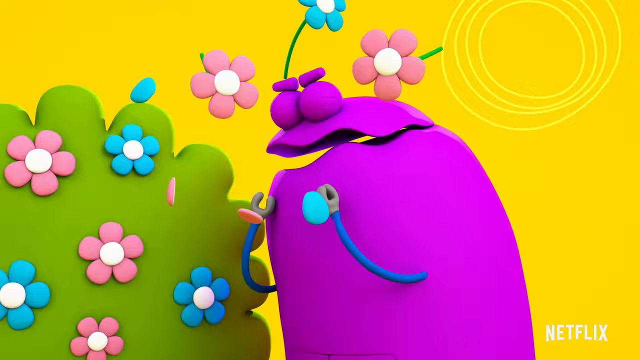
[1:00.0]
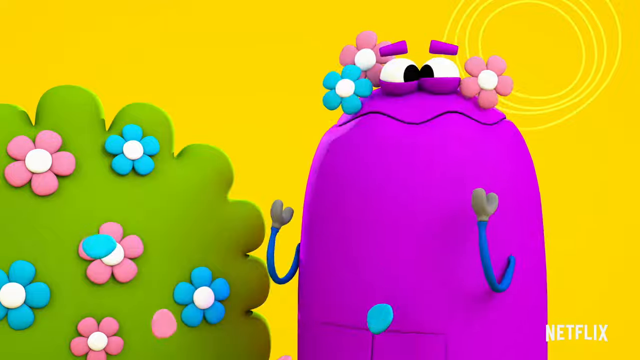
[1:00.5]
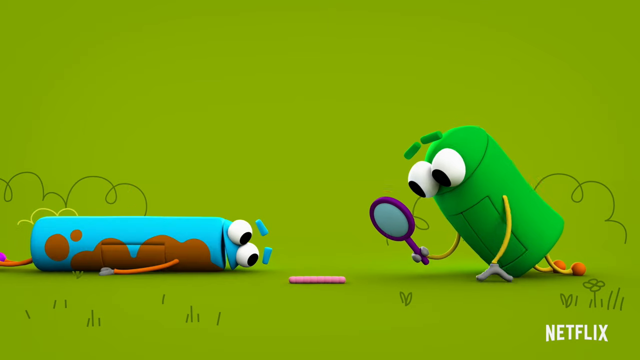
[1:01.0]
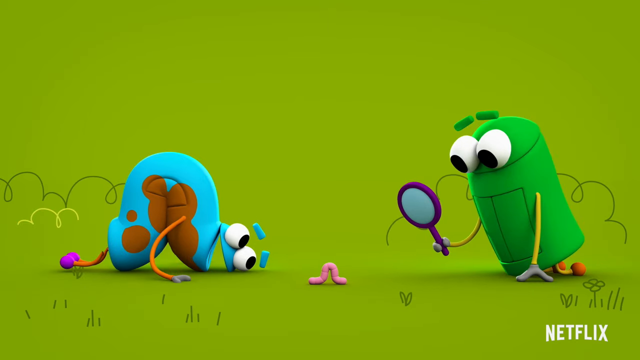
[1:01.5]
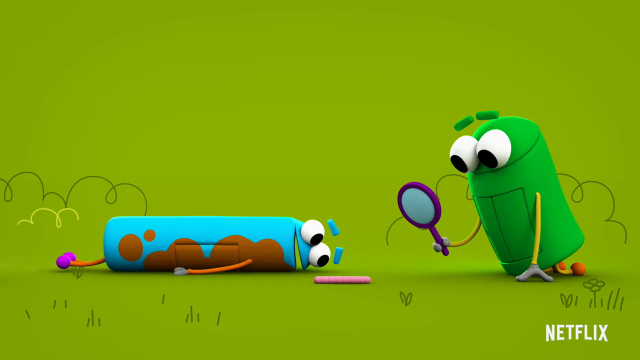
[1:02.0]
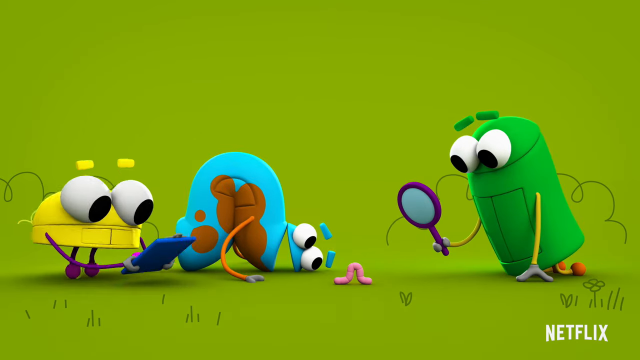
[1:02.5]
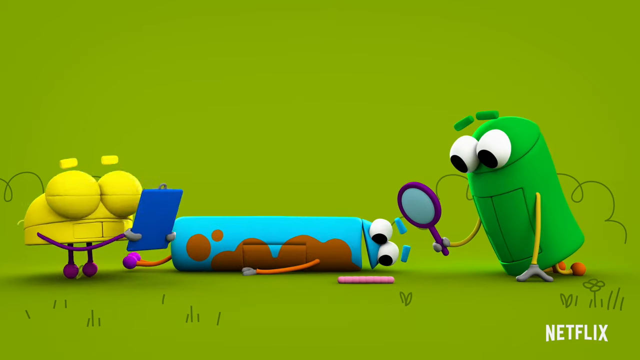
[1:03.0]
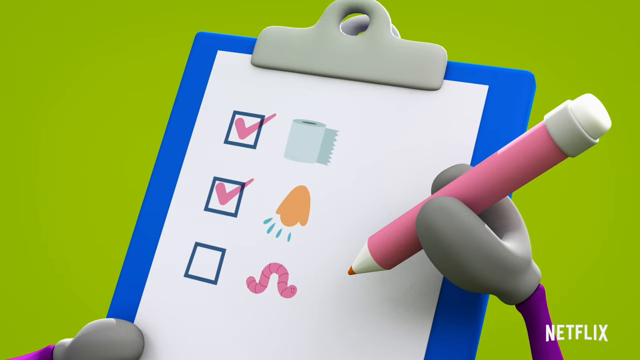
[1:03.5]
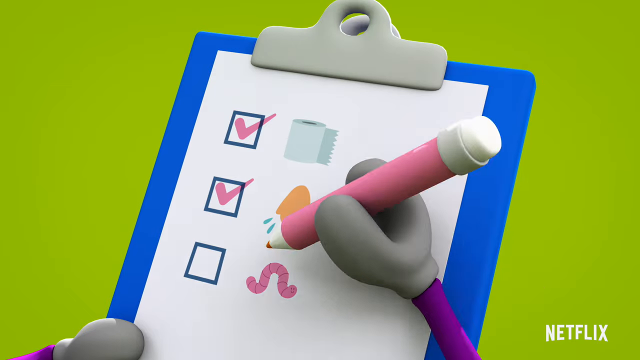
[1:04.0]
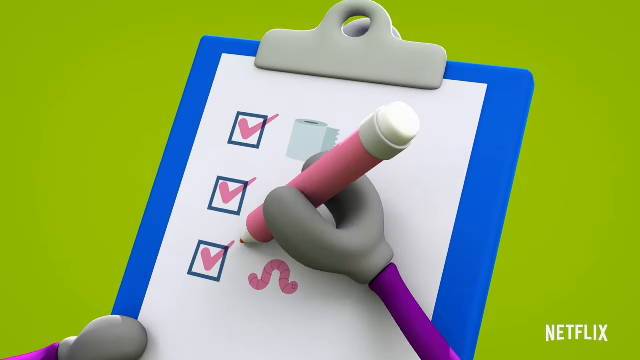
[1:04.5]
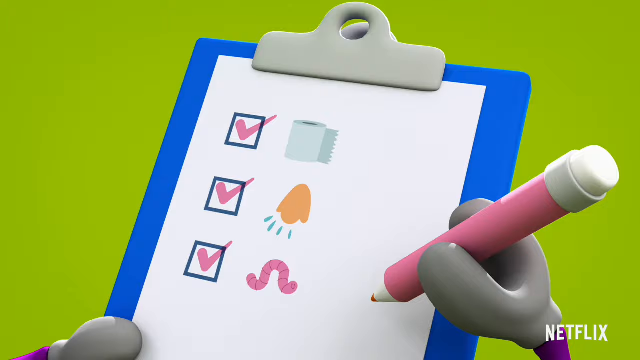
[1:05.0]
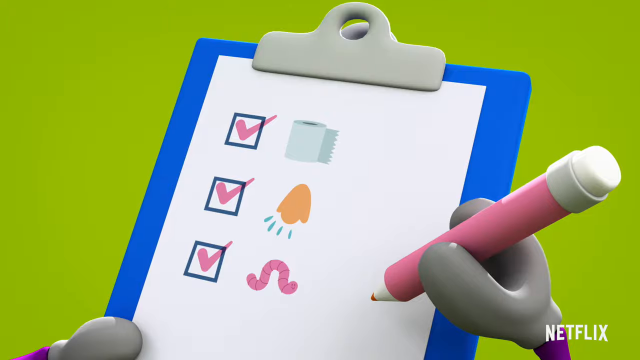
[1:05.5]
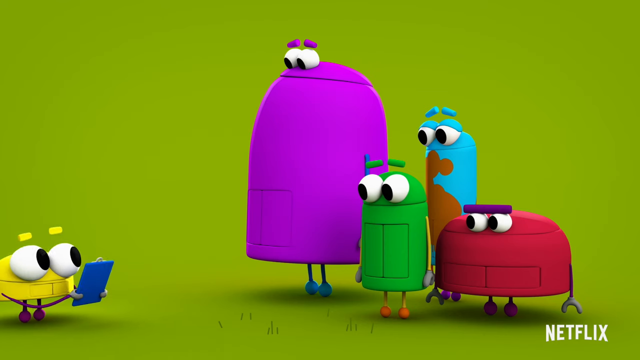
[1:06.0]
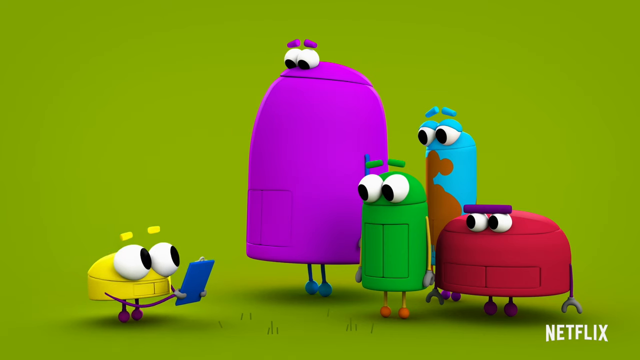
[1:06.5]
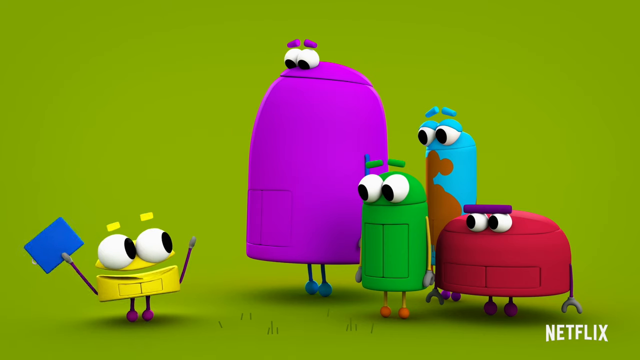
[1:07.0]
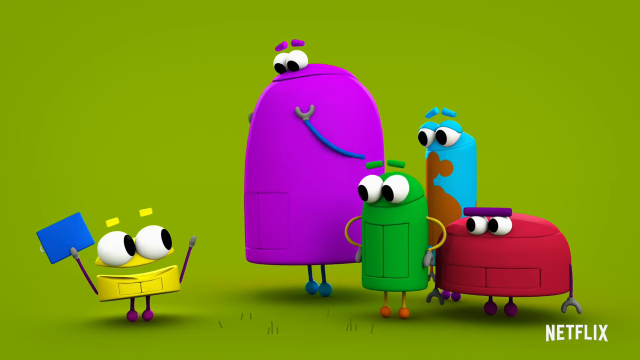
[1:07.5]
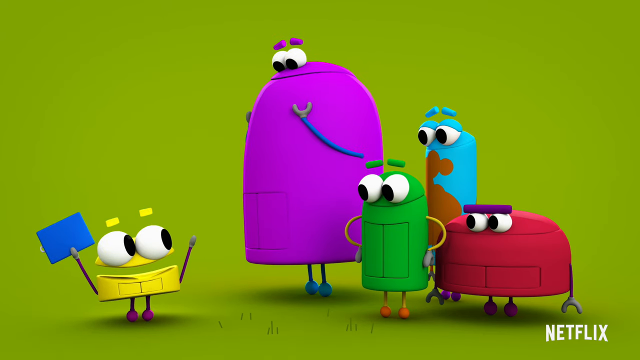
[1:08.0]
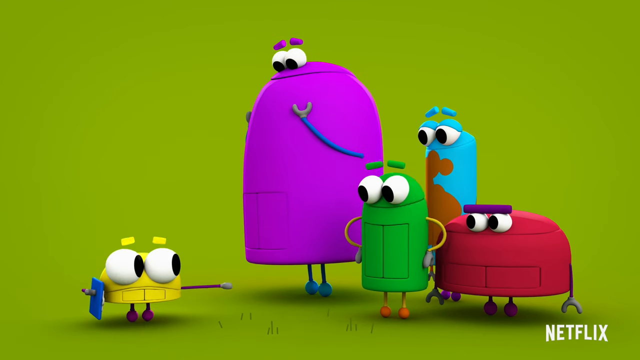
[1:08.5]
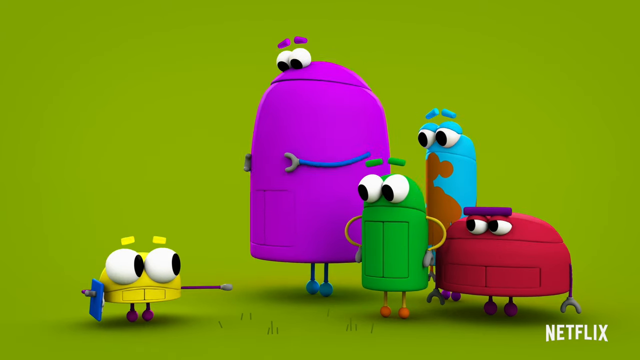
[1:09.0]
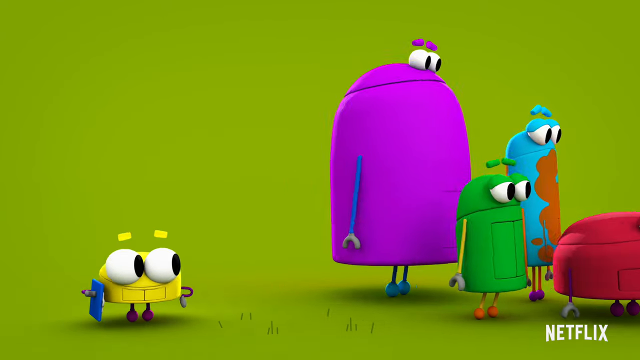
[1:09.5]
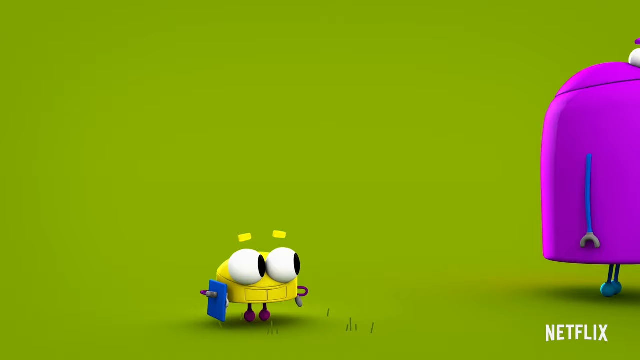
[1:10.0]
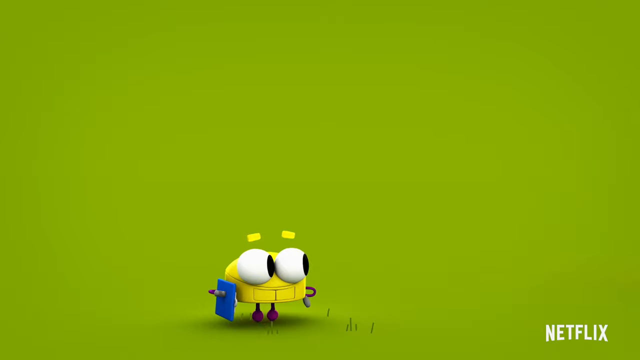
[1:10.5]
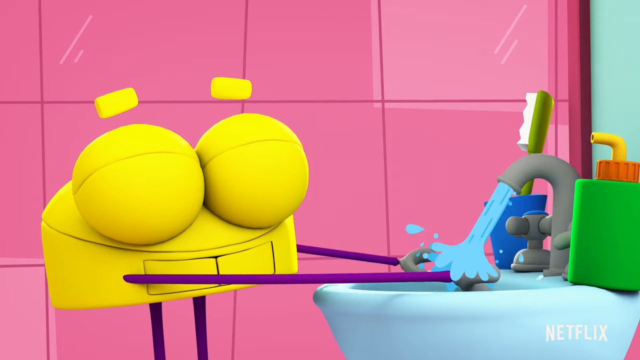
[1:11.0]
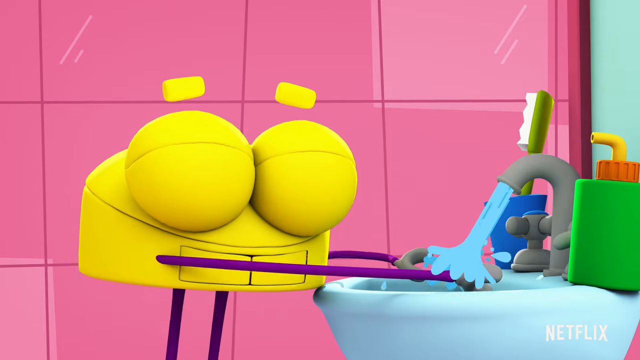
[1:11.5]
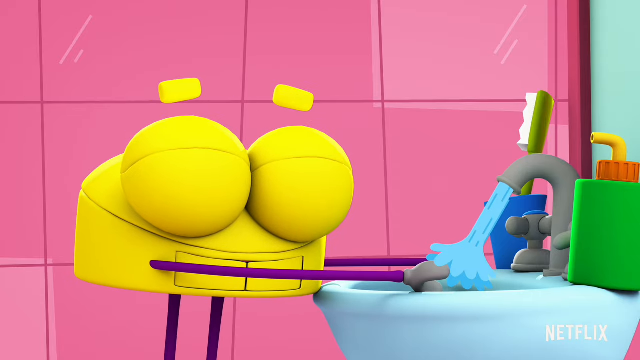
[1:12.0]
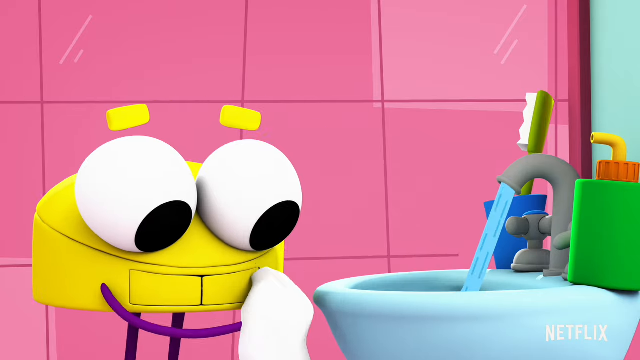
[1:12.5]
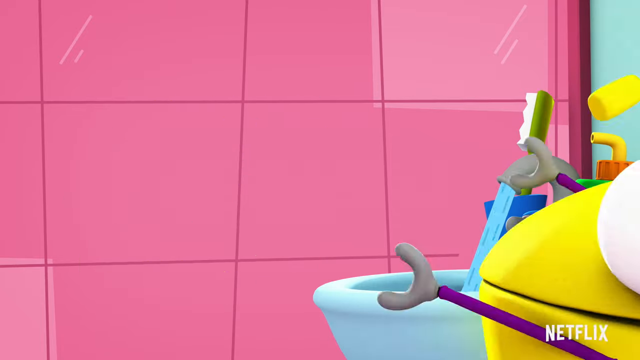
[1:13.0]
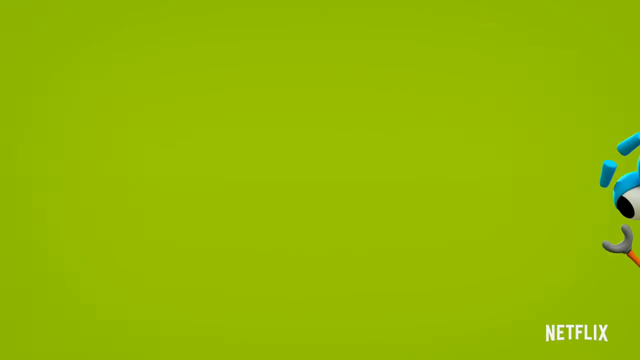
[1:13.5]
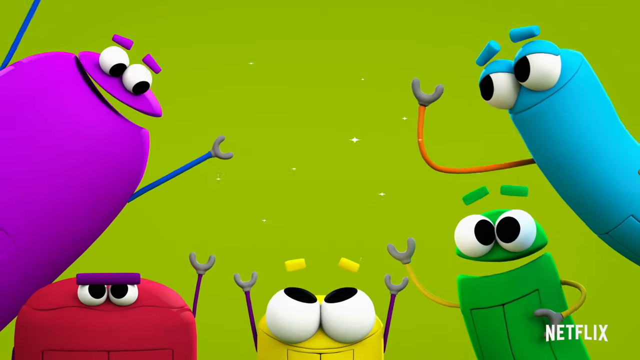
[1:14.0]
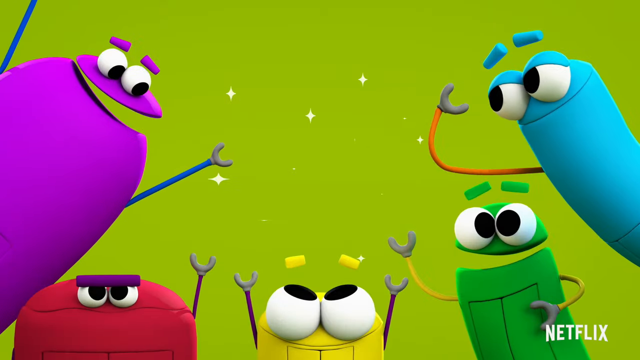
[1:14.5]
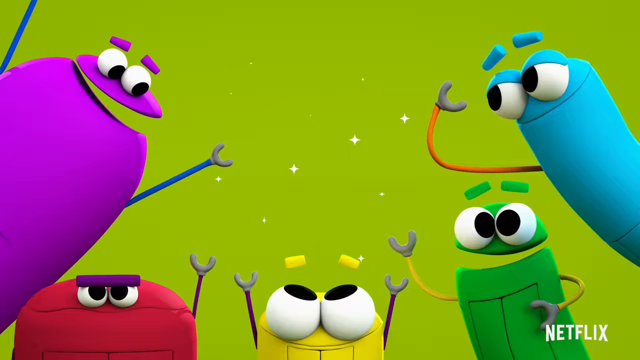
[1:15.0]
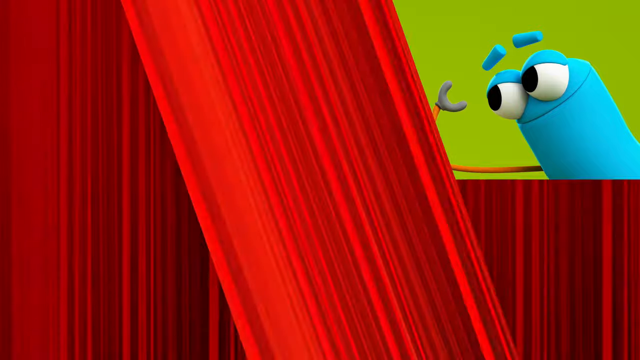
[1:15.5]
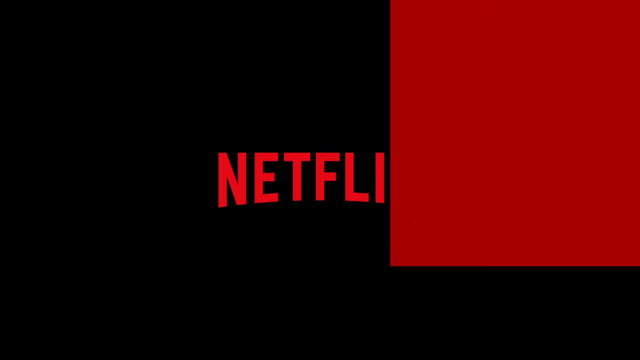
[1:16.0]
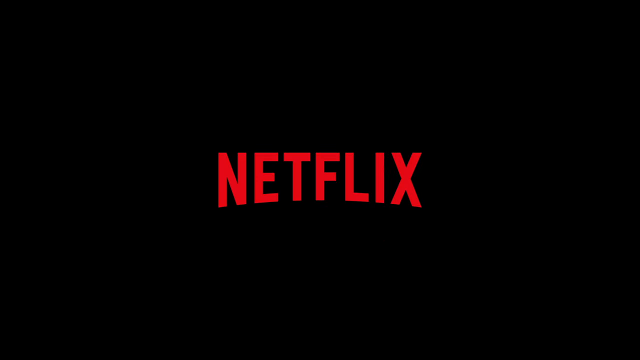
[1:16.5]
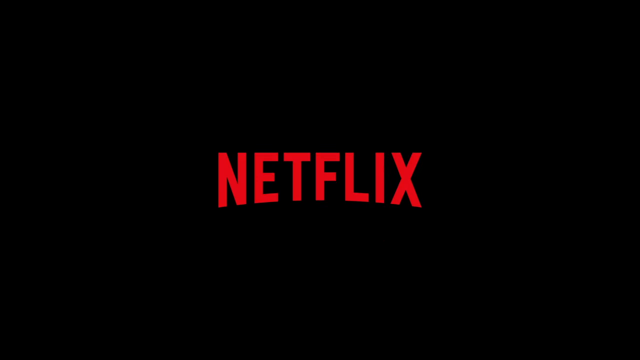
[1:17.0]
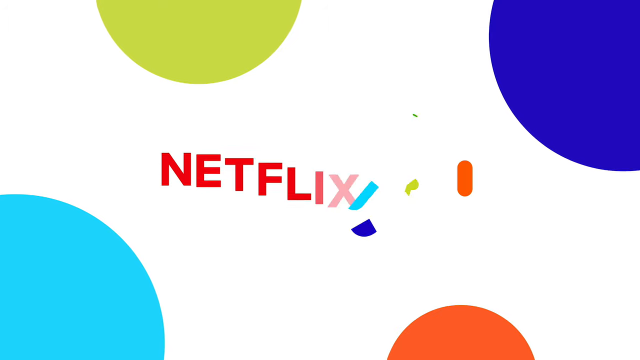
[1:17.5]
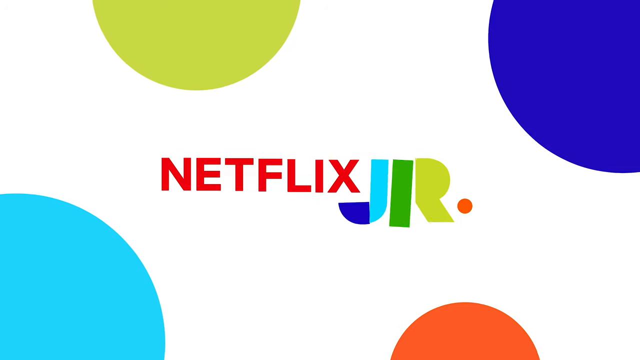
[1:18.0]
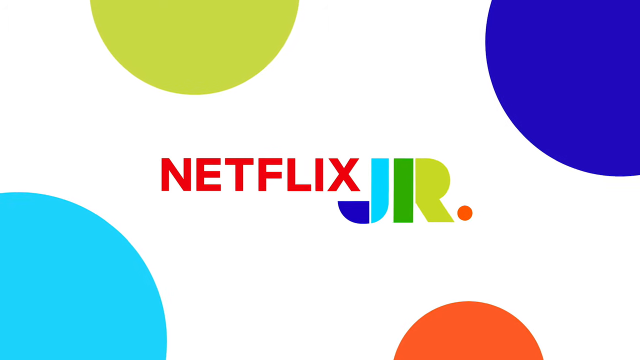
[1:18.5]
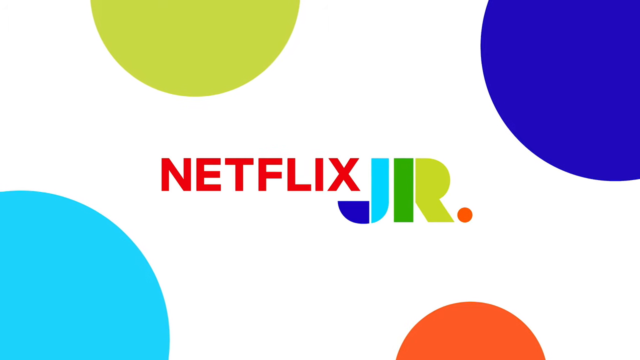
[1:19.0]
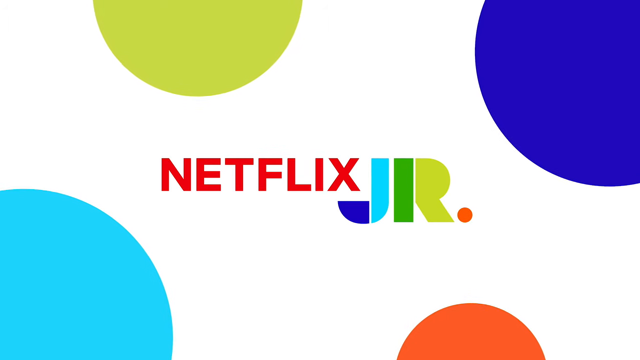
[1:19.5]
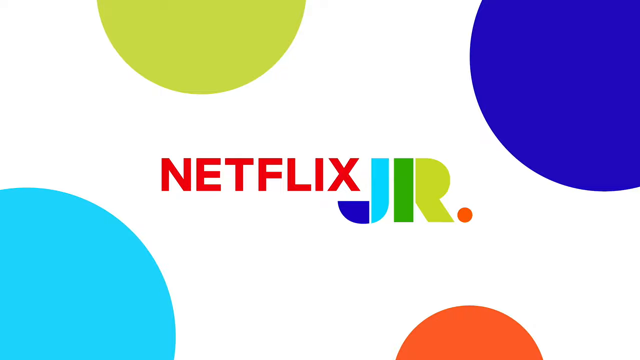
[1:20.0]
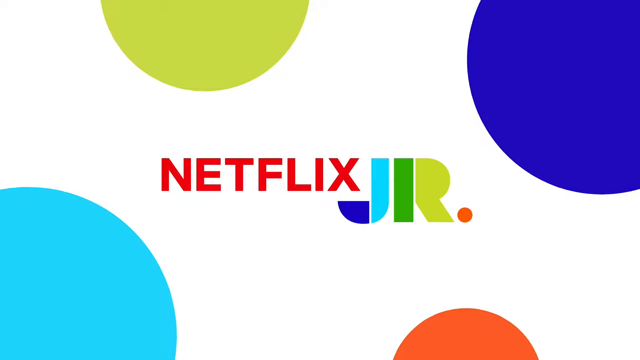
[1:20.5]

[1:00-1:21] The purple creature gets flowers in his hair. It cuts to the green background, where the blue one, his belly kind of dirty, is kind of crawling along the floor to the right like a worm, with a little pink worm right next to him following him. The green one is on the right with his magnifying glass out, looking at the worm. The yellow one comes in from the left with his clipboard in his hands, and the blue one kind of lies down next to the worm. The clipboard is shown with a piece of paper clipped to it bearing a checklist: a checkbox with toilet paper, a checkbox with a nose that is sneezing, and another checkbox with a worm next to it, which is empty and then quickly checked. The yellow one returns to the group of creatures, the purple, green, blue and red ones, with the blue one still pretty dirty. The yellow one lifts his arm up in triumph with a kind of happy expression, then gestures to the right to all the others, and they go off screen. The yellow one looks kind of self-satisfied and has his hands on his hips. It cuts to the pink bathroom again, where the yellow one washes his hands and dries them with the blue towel. It then cuts to the green background again, where all the creatures have their hands raised and are all sparkling and happy. A red ribbon comes across the screen and reveals a black screen with the Netflix logo in the middle. The screen then turns white with a multicolored polka dot pattern, and in the middle is a Netflix junior logo.